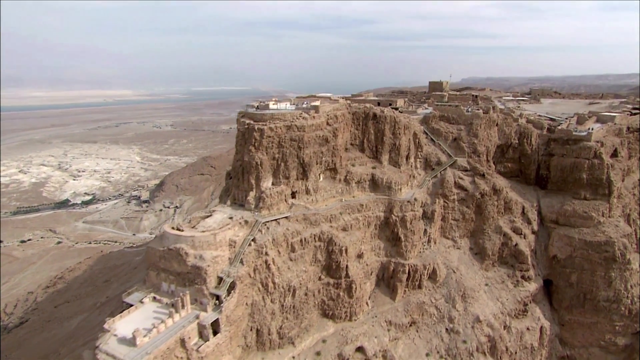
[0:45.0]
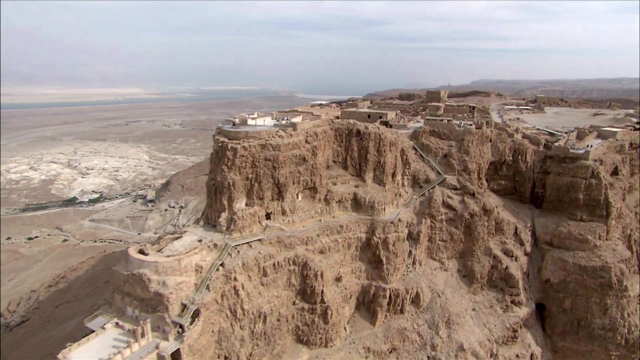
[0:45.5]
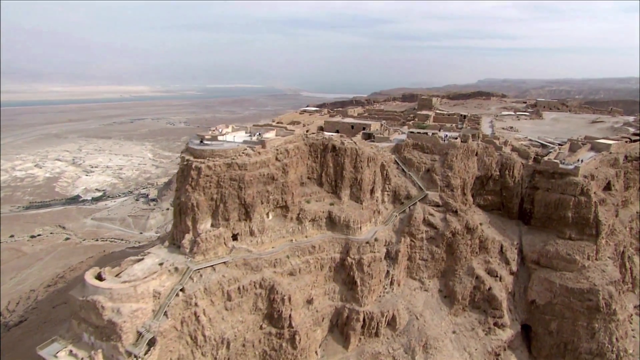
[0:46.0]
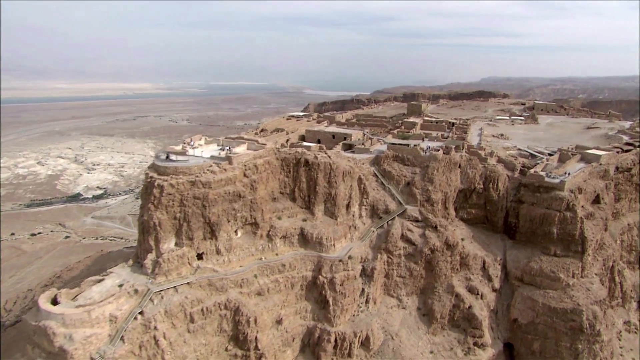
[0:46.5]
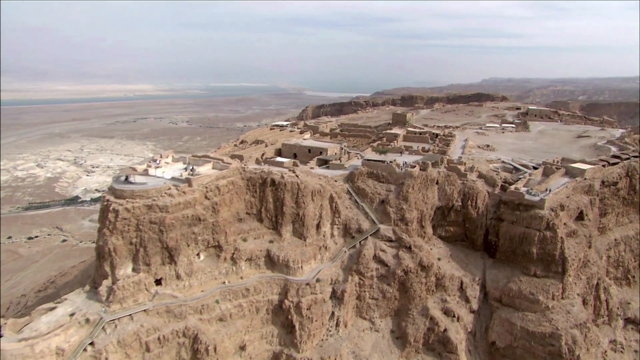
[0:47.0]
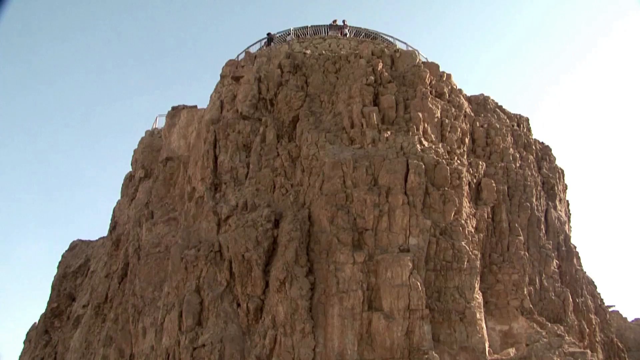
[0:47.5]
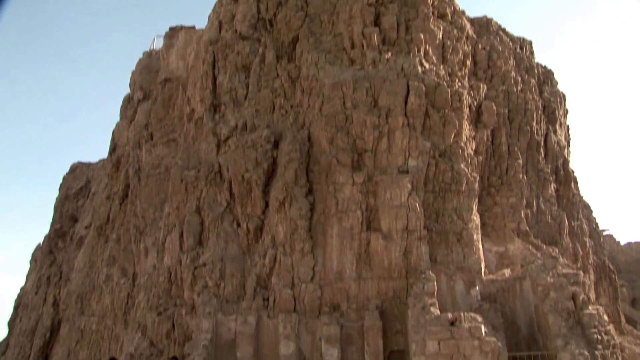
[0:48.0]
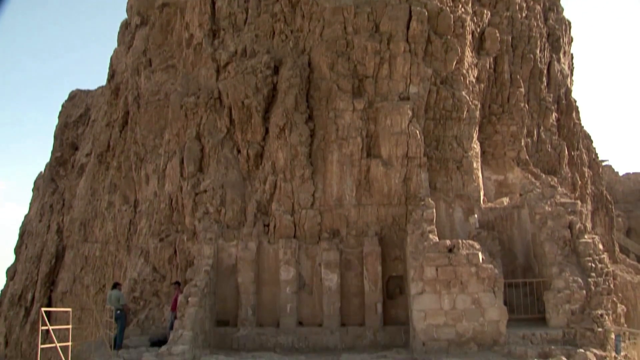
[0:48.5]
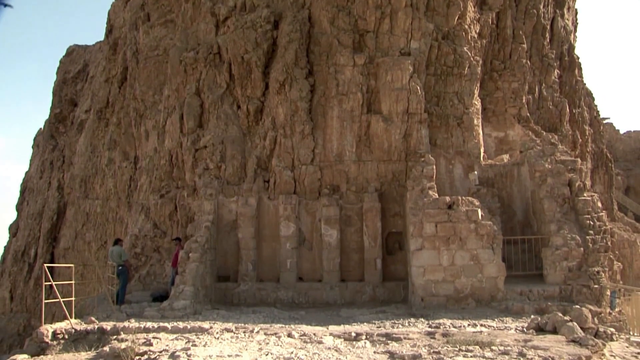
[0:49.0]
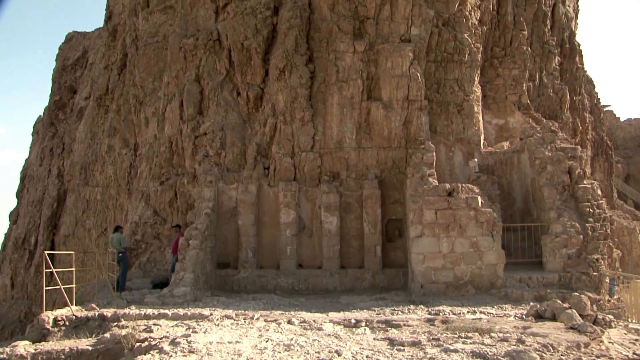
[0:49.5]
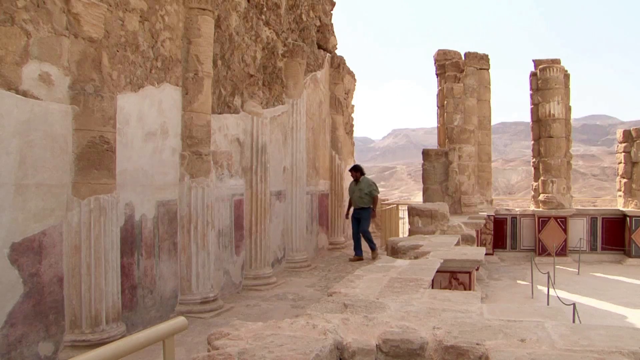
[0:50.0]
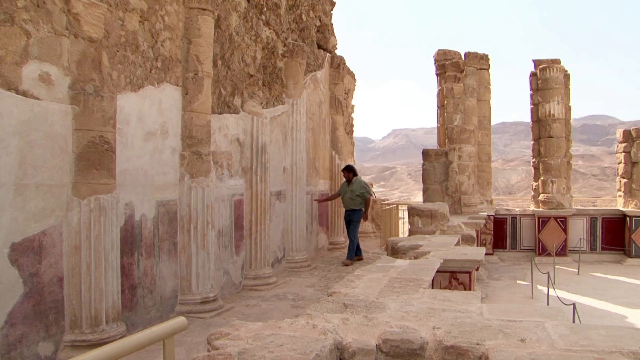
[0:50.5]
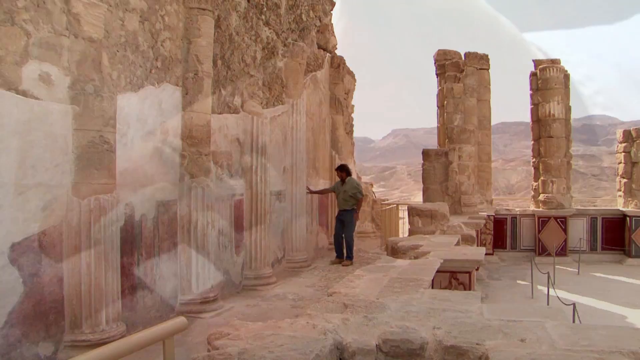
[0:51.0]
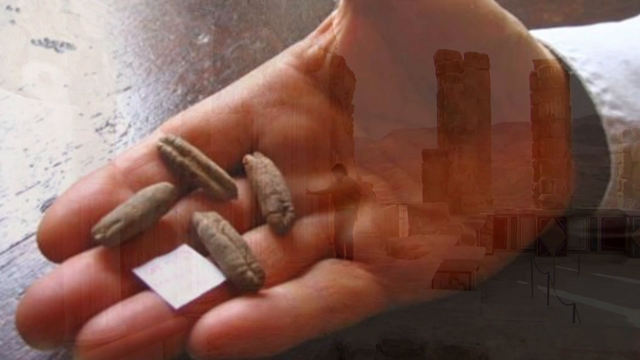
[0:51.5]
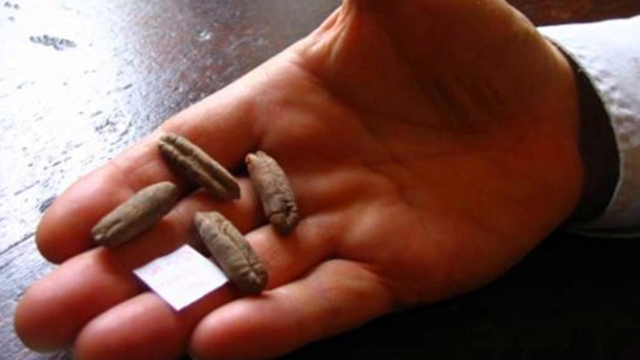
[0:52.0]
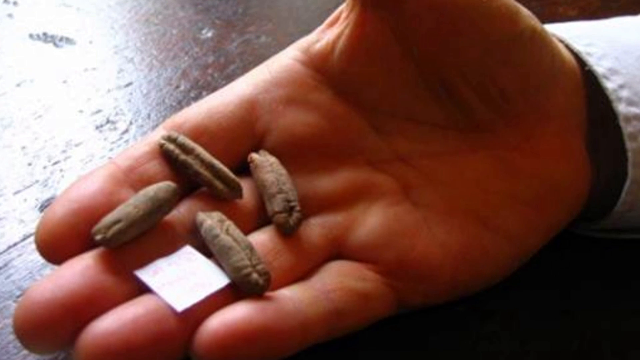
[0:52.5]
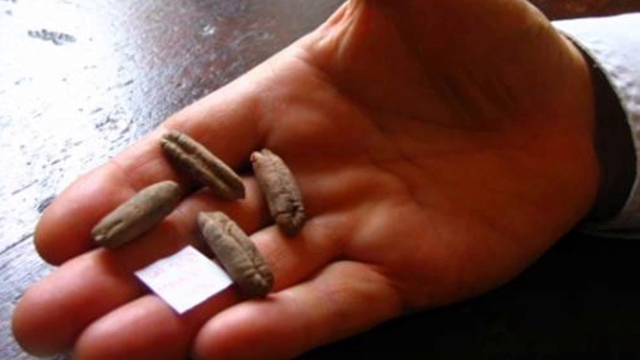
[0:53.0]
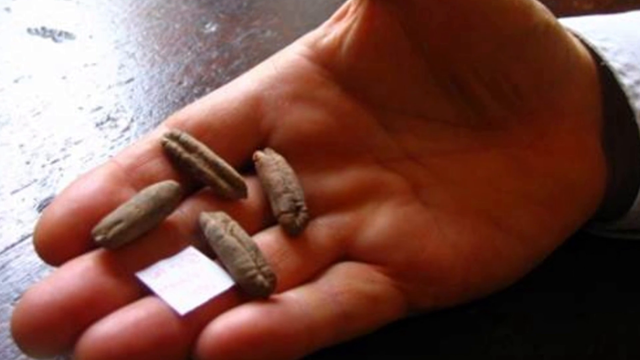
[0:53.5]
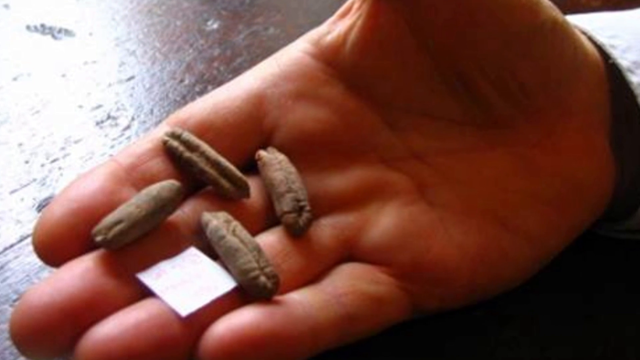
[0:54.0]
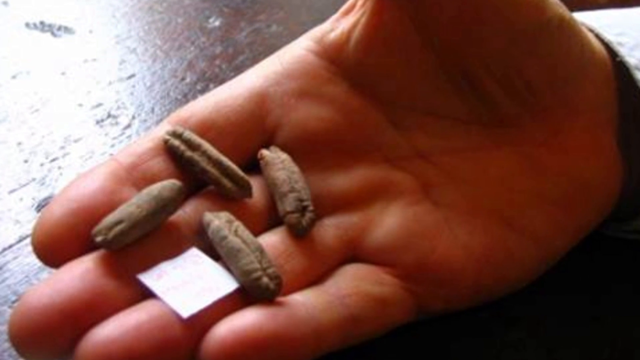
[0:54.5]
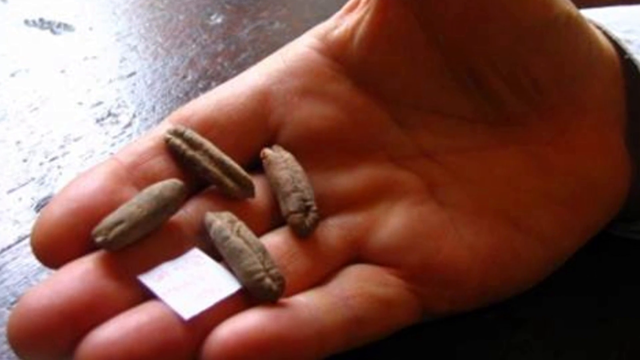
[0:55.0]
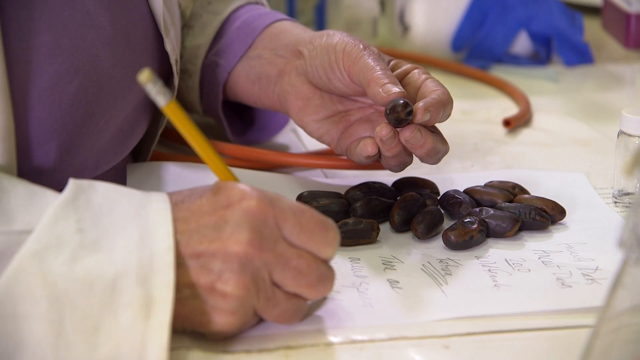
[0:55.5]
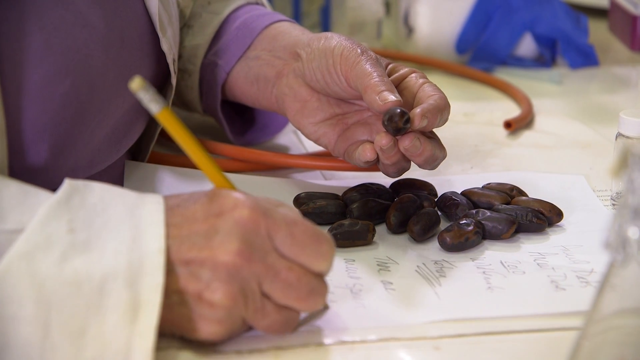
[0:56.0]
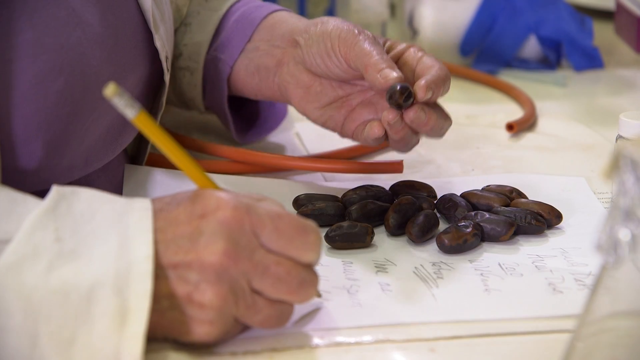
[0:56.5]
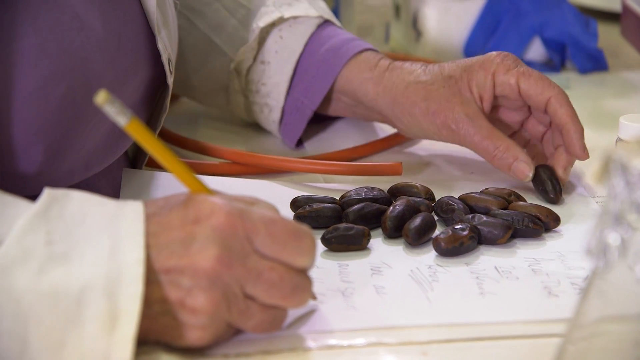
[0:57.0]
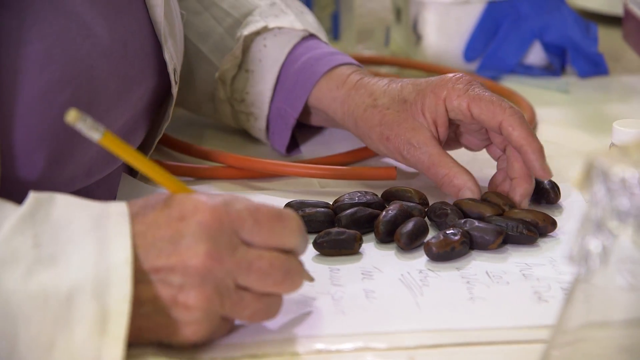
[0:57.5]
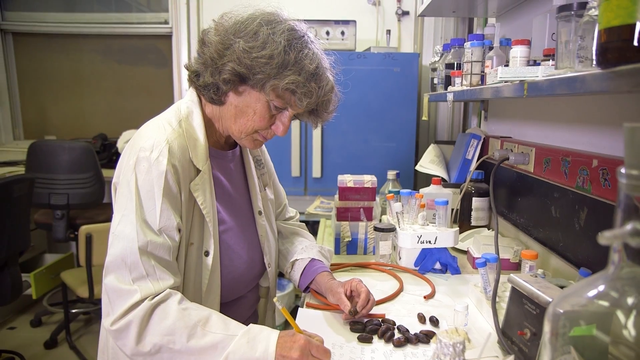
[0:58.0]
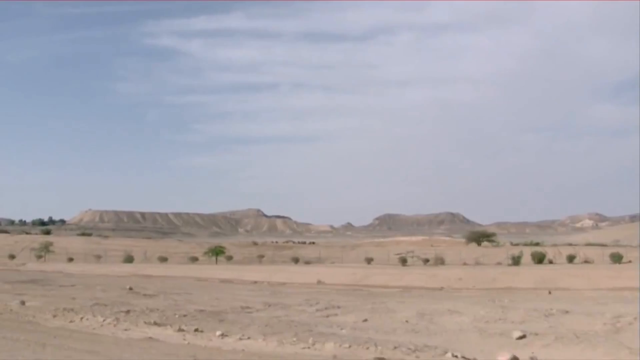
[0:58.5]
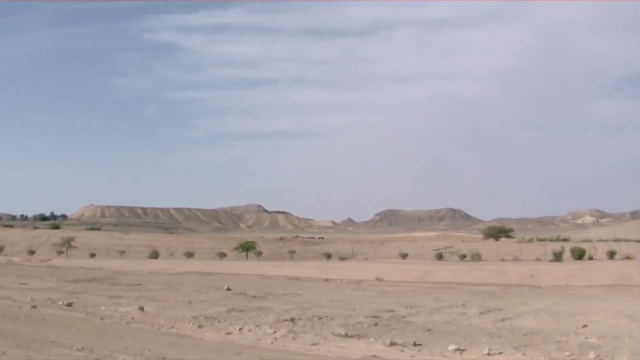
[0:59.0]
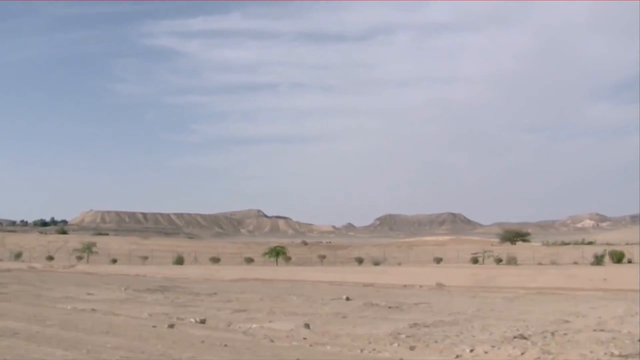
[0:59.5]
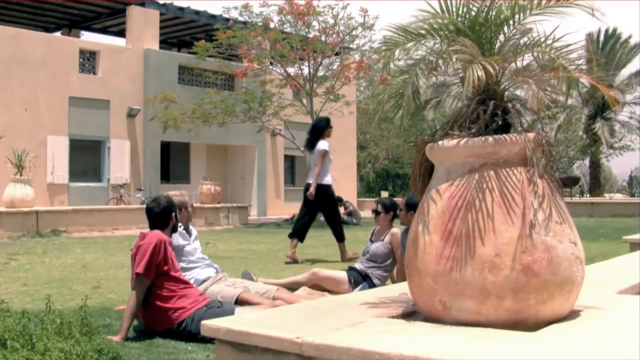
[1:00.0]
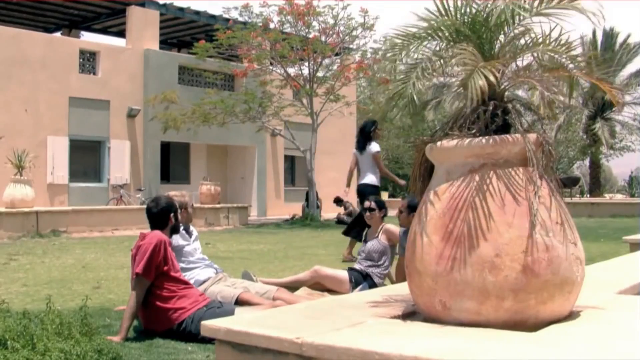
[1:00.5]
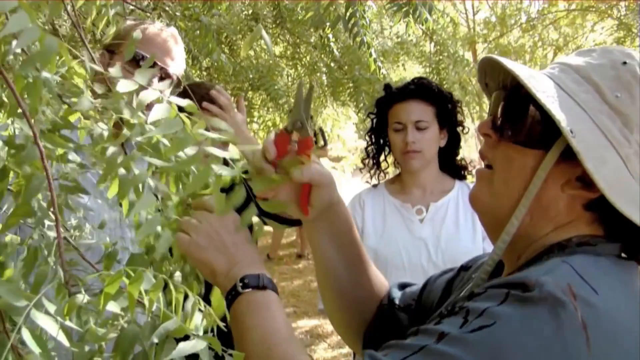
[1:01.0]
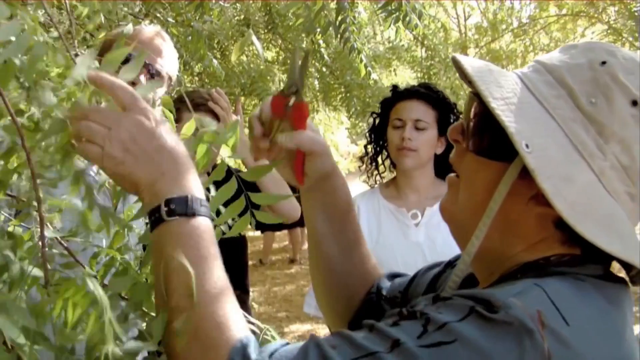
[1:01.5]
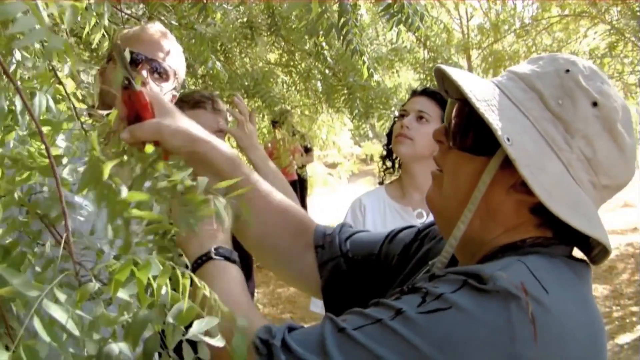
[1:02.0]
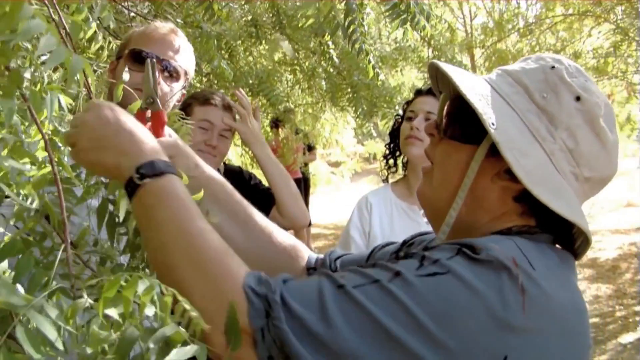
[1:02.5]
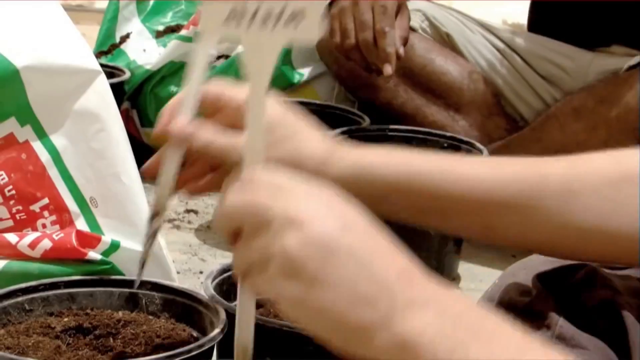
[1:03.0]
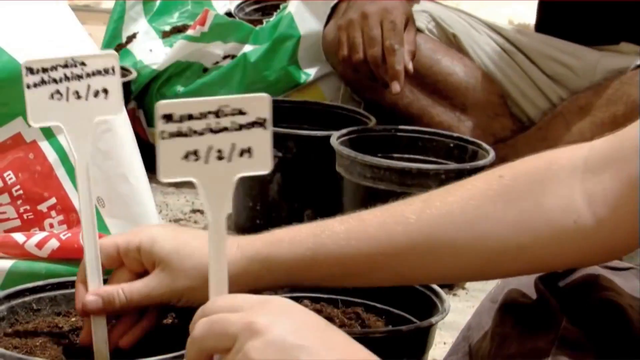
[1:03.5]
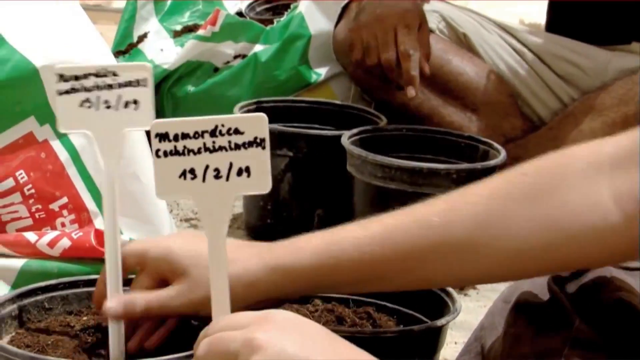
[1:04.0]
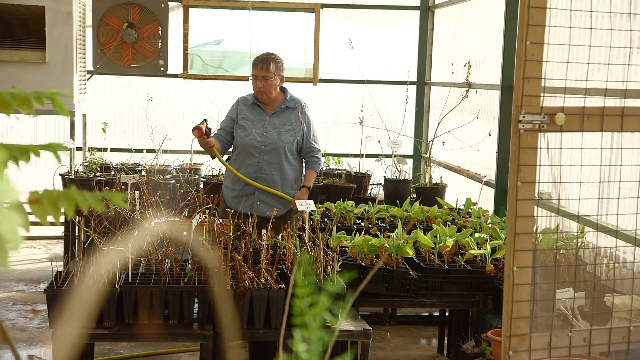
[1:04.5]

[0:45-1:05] The first picture shows the large plateau of a buried city with people walking around. Seeds of the Judean date palm have apparently been found buried in this area. The video shifts back and forth between people planting and watering them and general plant care. Small seeds that somewhat resemble a miniature hot dog bun are shown, along with seeds that look like elongated walnuts. A woman trims a tree and a man waters them. The video keeps shifting back to the plateau and the city. A woman writes on a piece of paper about the seeds, their size and their shape, and the rest is general plant care.